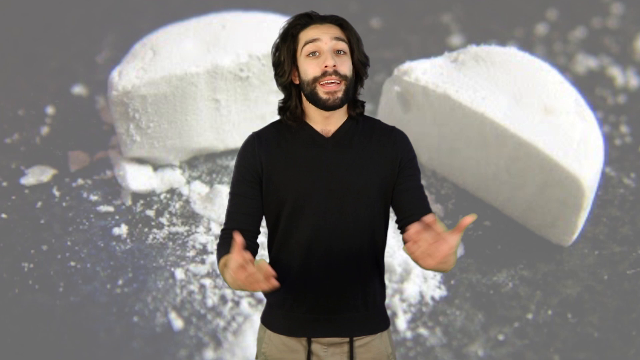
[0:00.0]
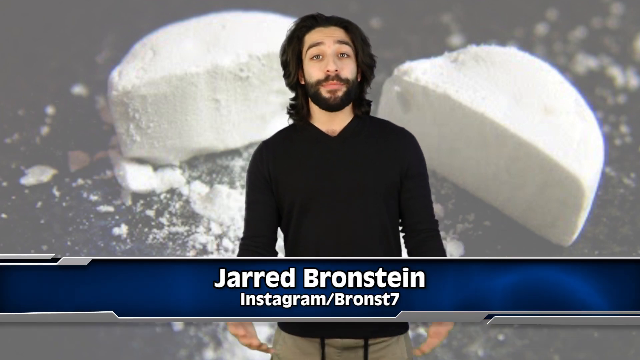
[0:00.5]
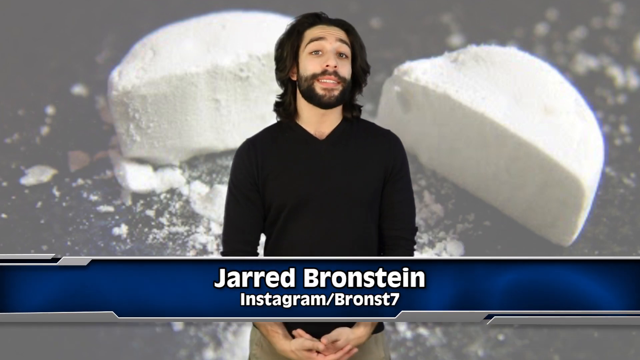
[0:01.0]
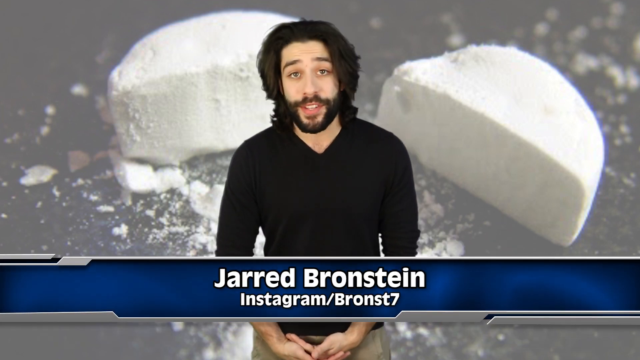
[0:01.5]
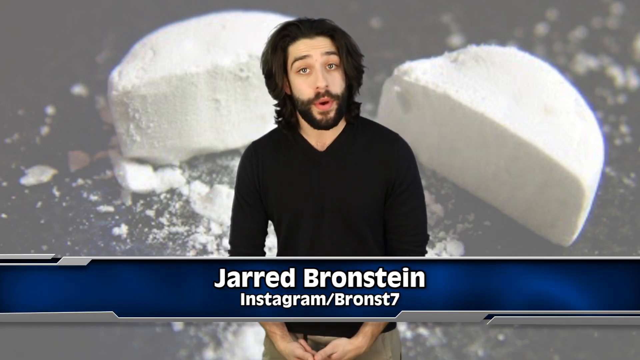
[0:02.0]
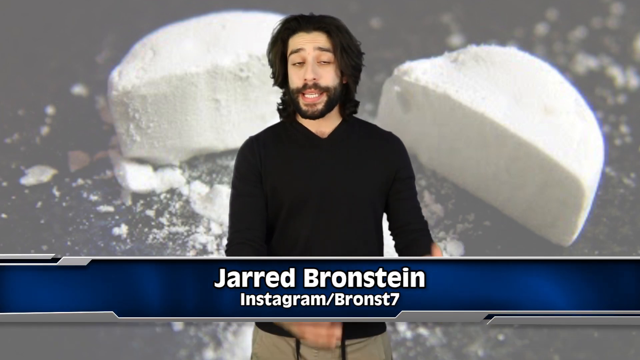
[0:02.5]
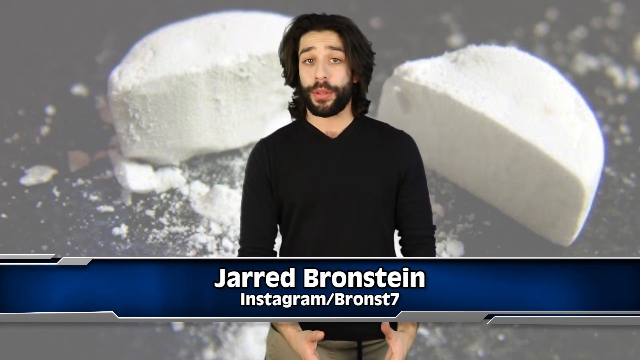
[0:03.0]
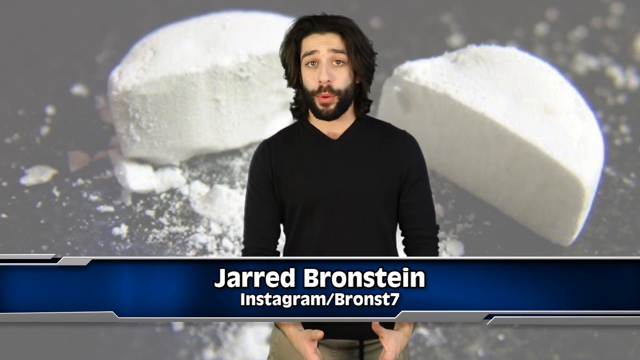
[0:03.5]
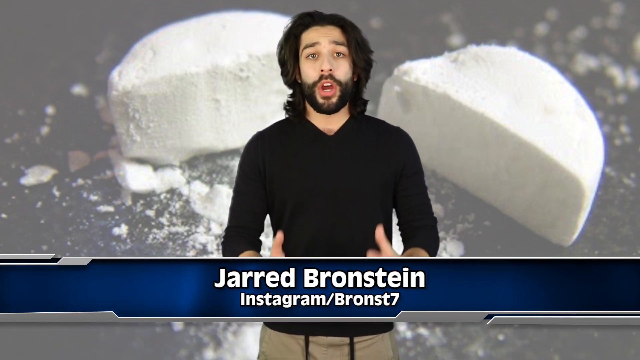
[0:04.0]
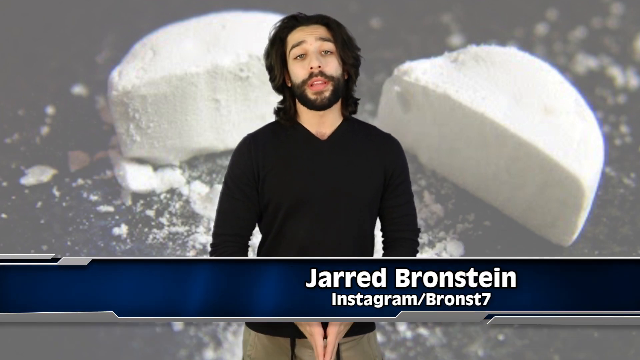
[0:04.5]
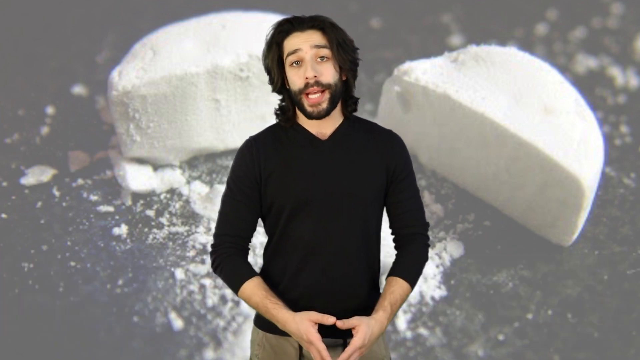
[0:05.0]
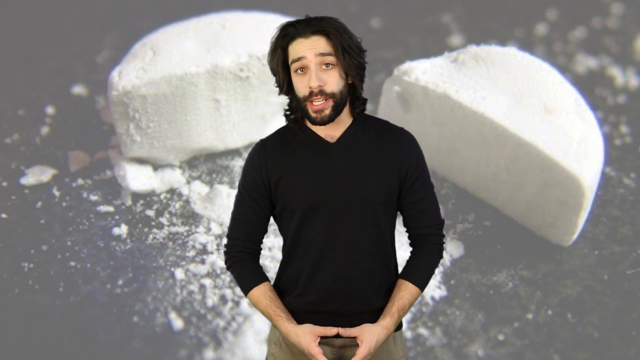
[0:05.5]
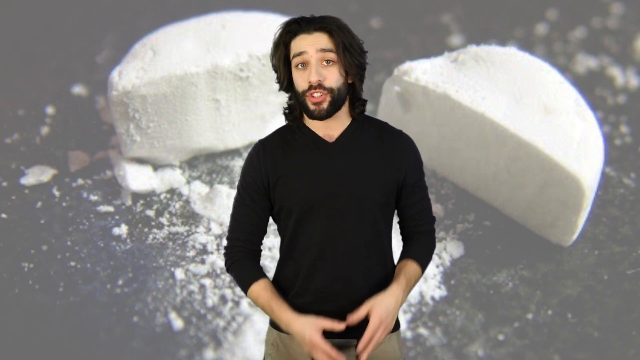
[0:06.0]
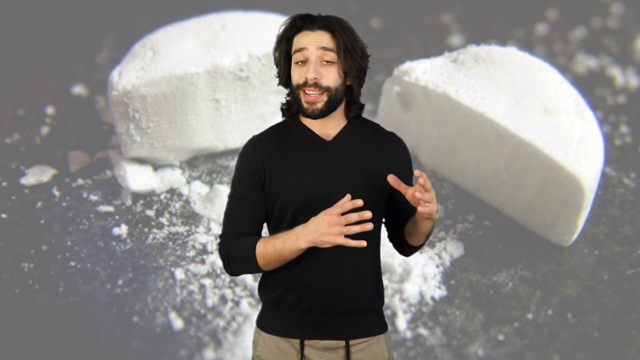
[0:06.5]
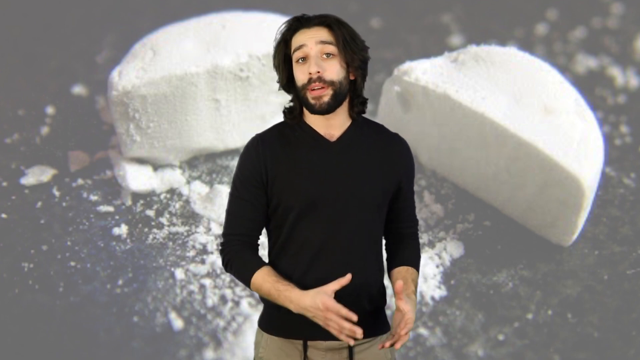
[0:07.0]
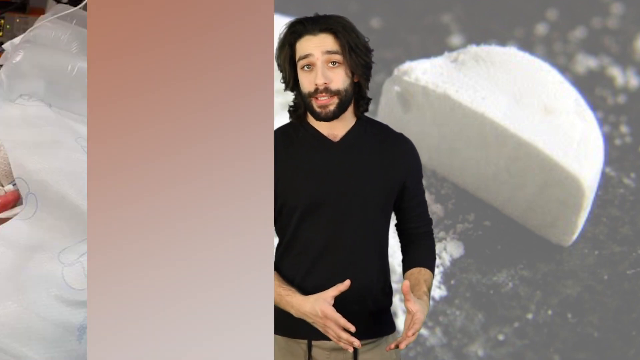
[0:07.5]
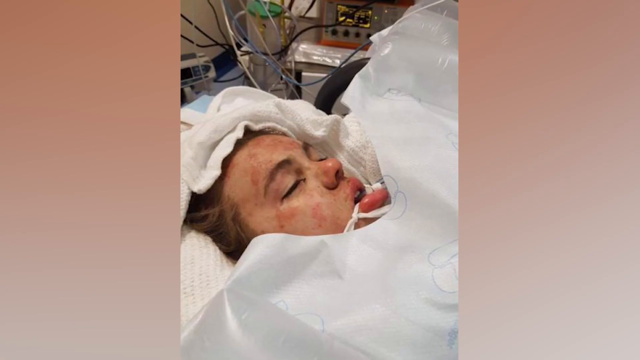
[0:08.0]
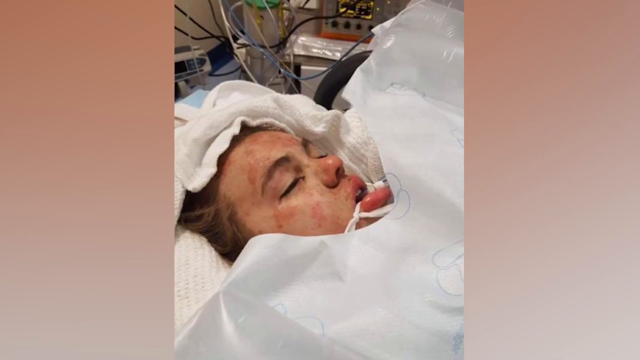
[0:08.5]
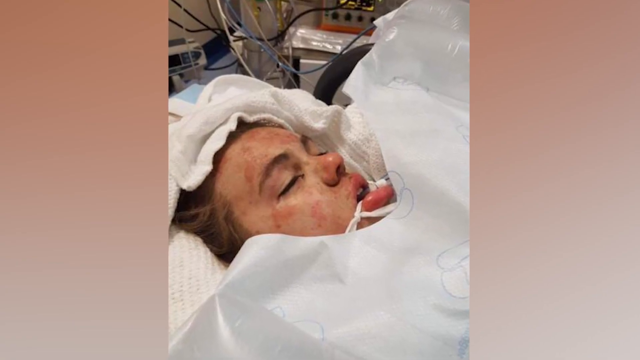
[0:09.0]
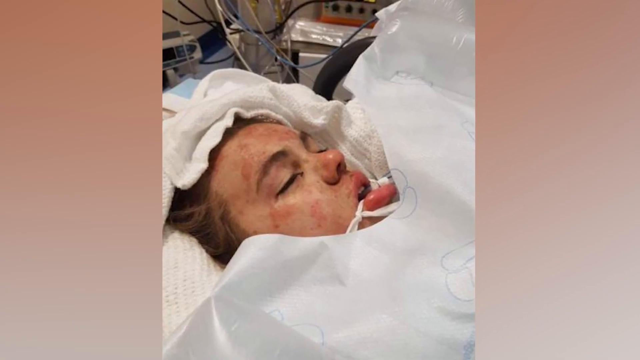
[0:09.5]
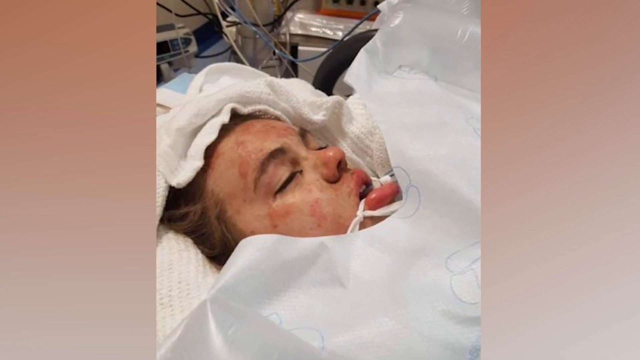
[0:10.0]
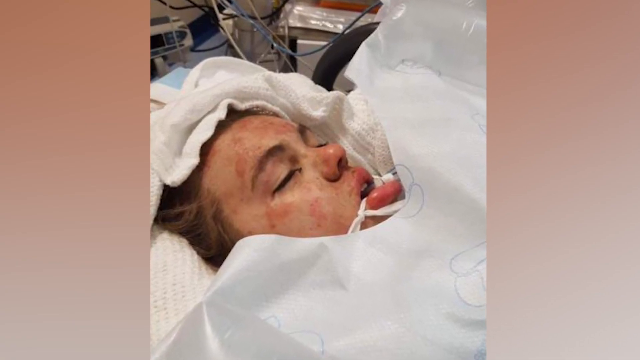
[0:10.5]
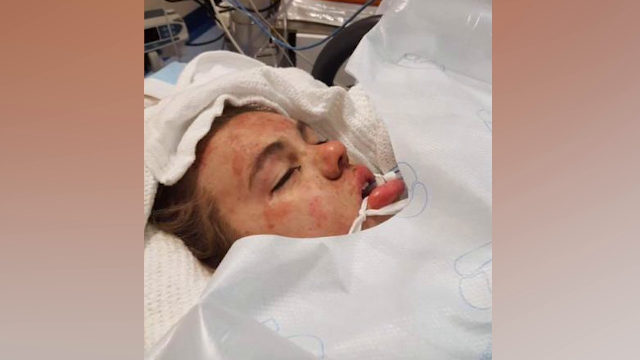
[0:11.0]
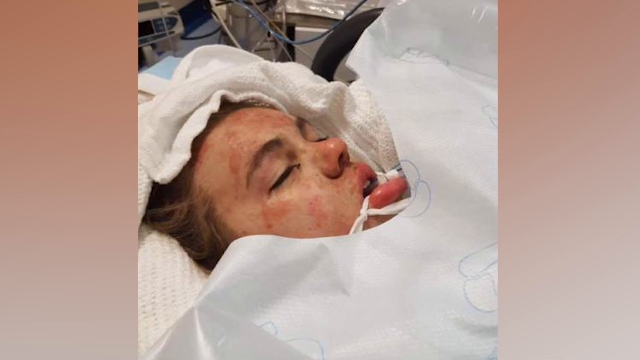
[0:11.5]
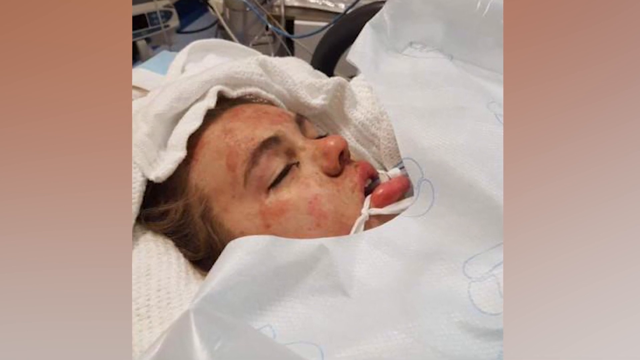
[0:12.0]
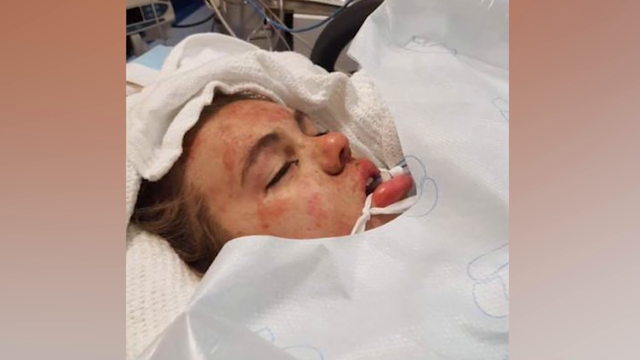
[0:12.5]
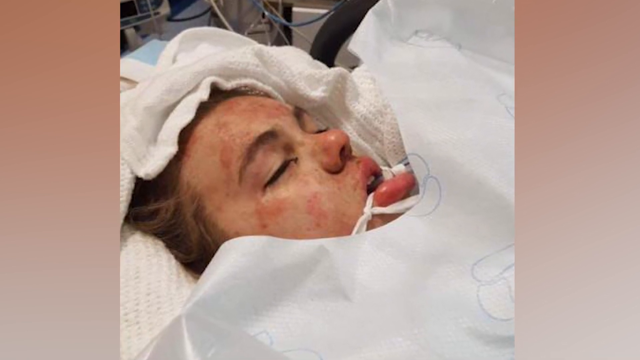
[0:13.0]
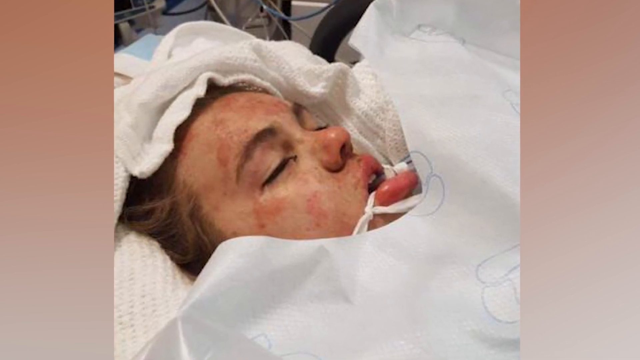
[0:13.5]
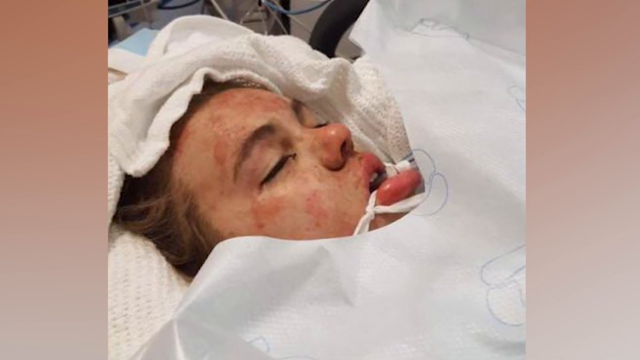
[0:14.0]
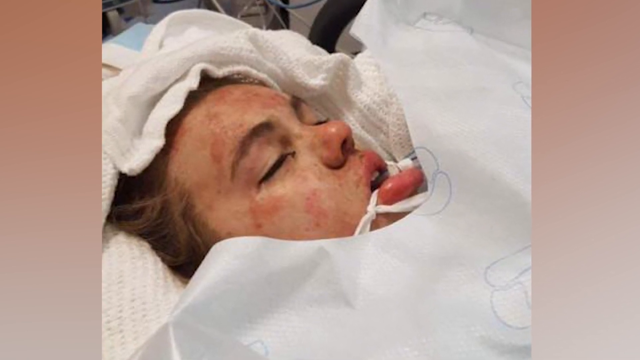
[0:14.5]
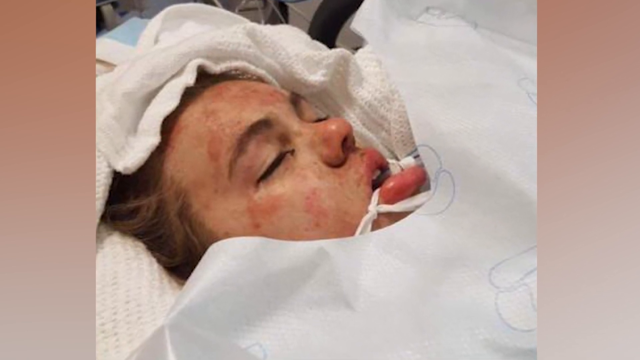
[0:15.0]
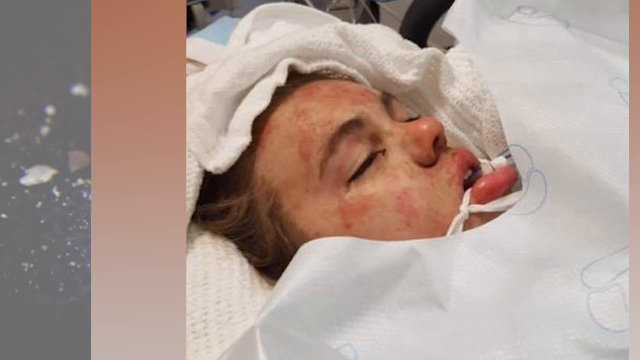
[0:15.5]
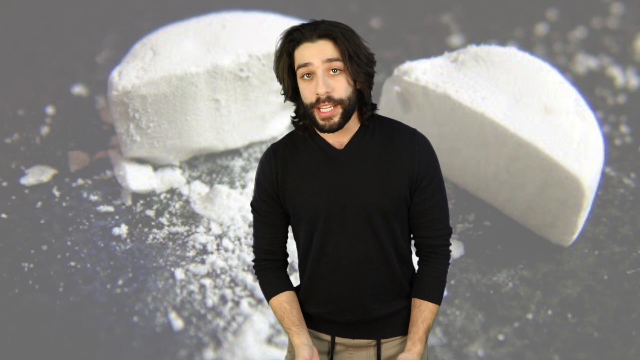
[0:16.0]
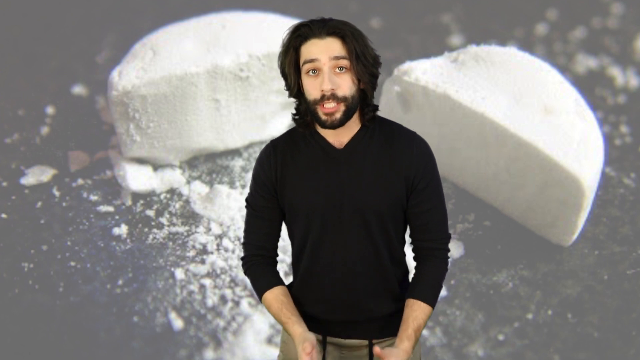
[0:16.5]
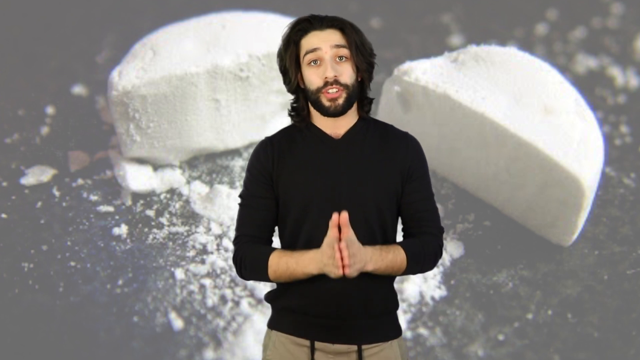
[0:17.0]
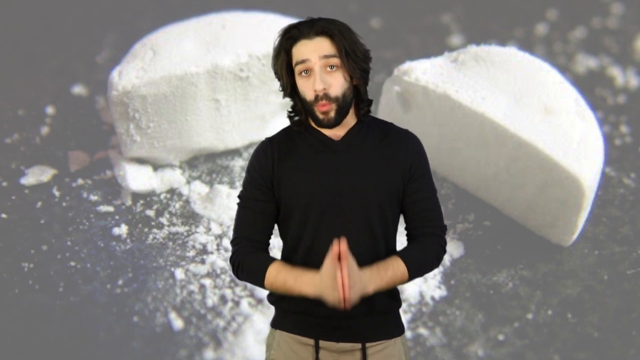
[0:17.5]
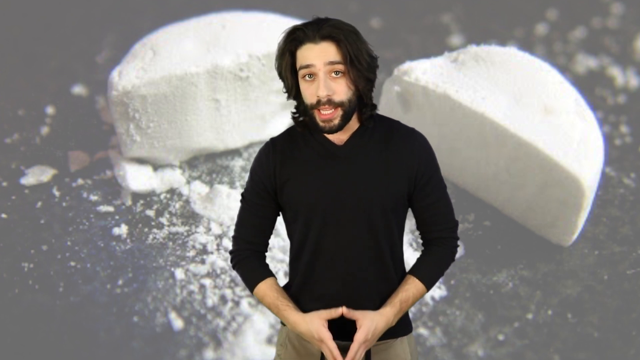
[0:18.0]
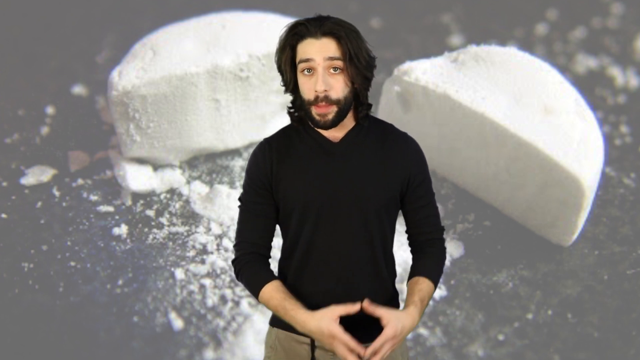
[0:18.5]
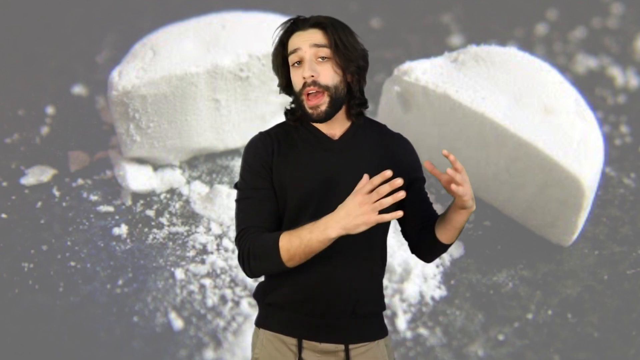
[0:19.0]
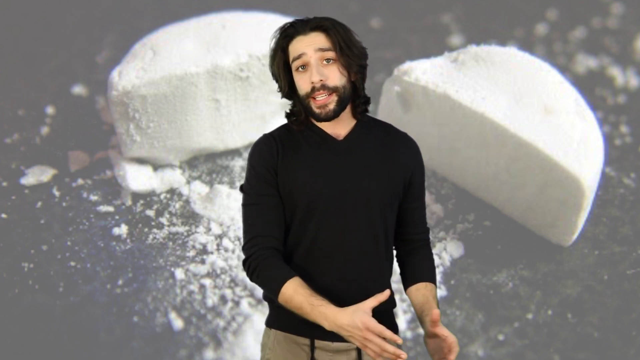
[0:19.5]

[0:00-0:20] A man appears against a green screen, with his Instagram at the bottom of the screen and his full name at the top. On the green screen is a white, chalky pill broken in half, with particles of it scattered in front of it, beside it and behind it on what looks like a table. It appears to have been cut in half with some type of utensil because of how evenly it is cut. The man talks in front of the screen, and then the video cuts to a photo of a woman in a hospital who appears to be in some kind of critical condition. She has gowns and towels around her, and her eyes are closed. Her face is very puffy, possibly from some kind of wound or accident. A tube, possibly a breathing tube or a feeding tube, sticks out of her mouth, and her lips are very protruded.